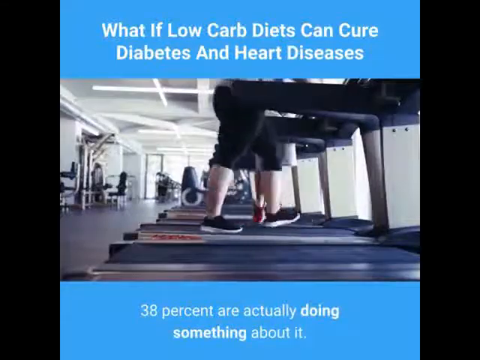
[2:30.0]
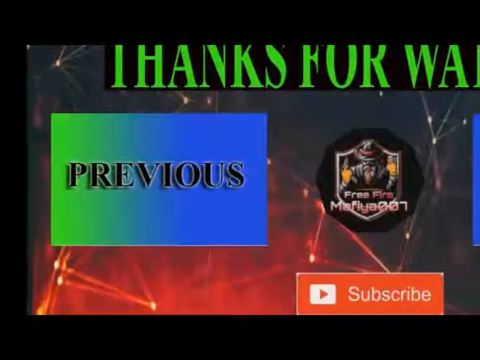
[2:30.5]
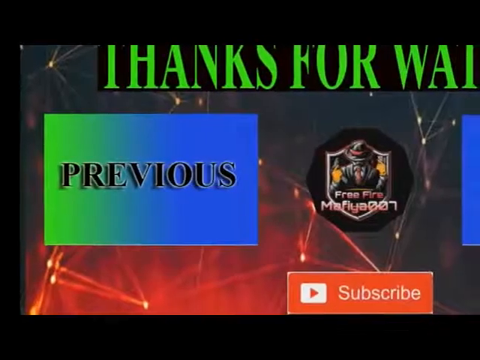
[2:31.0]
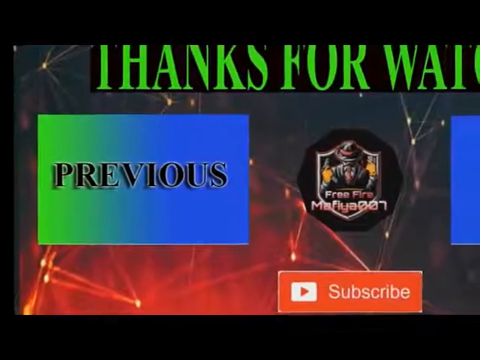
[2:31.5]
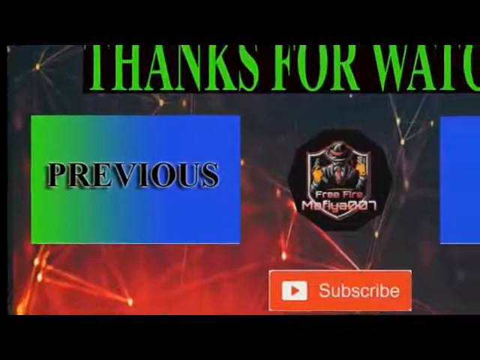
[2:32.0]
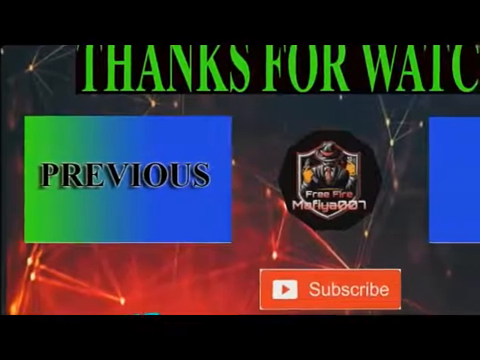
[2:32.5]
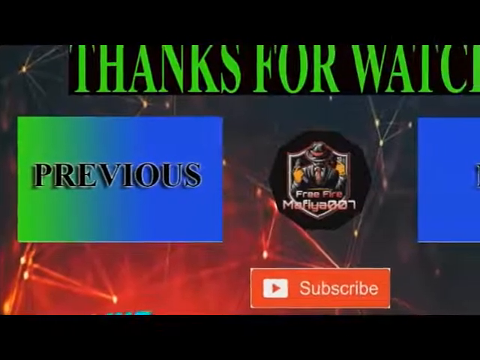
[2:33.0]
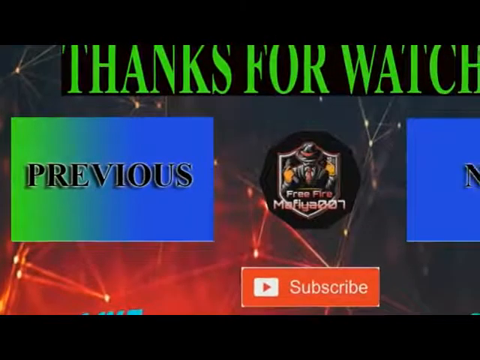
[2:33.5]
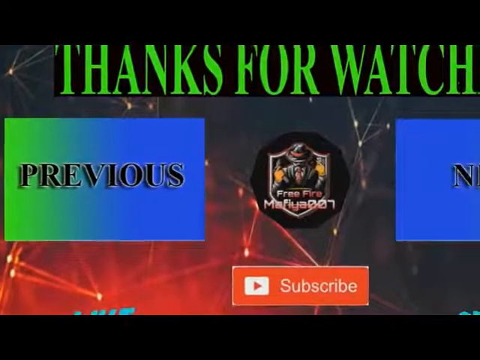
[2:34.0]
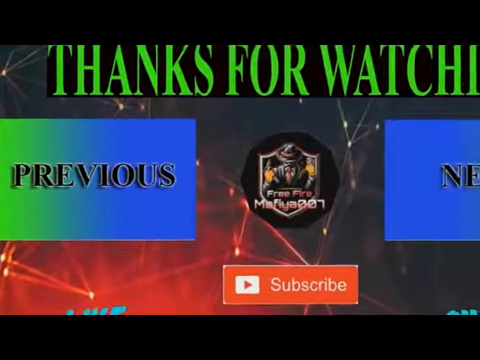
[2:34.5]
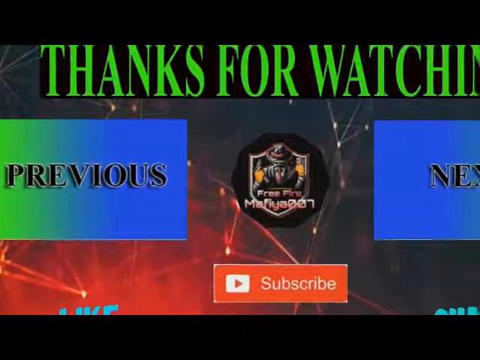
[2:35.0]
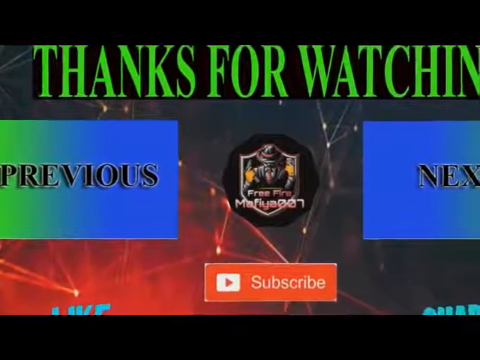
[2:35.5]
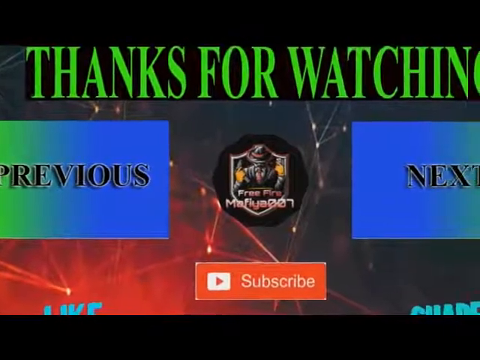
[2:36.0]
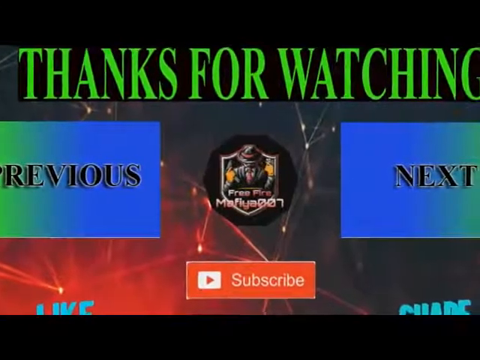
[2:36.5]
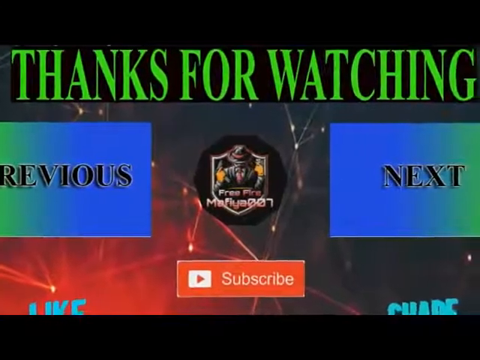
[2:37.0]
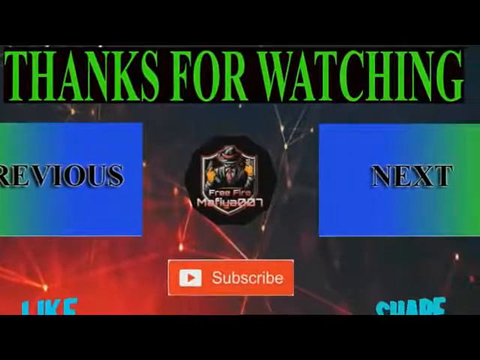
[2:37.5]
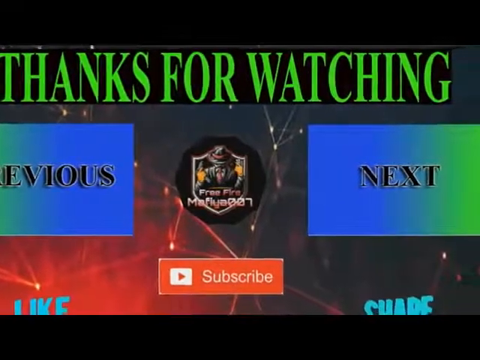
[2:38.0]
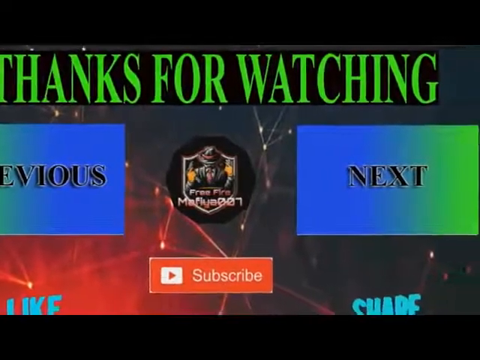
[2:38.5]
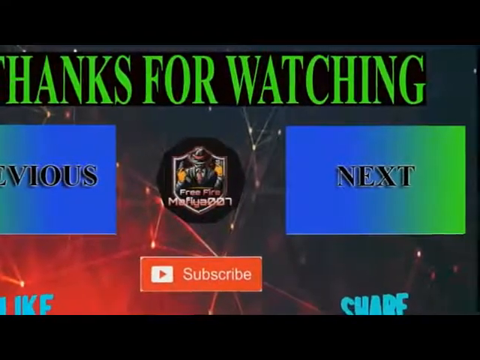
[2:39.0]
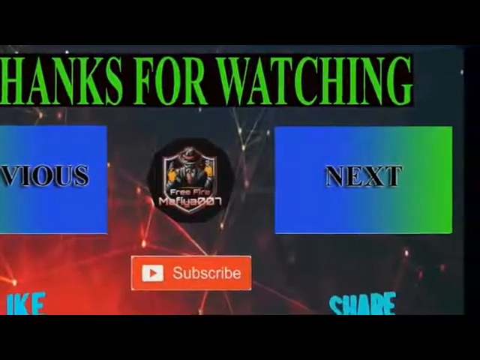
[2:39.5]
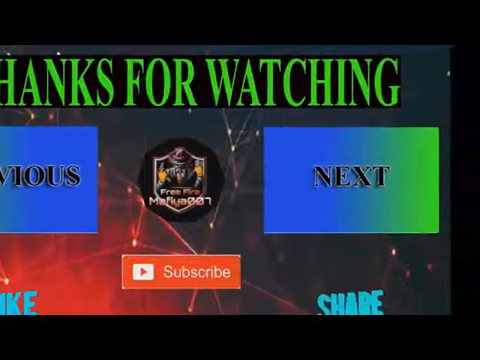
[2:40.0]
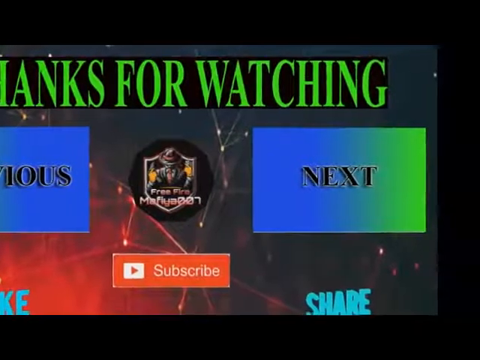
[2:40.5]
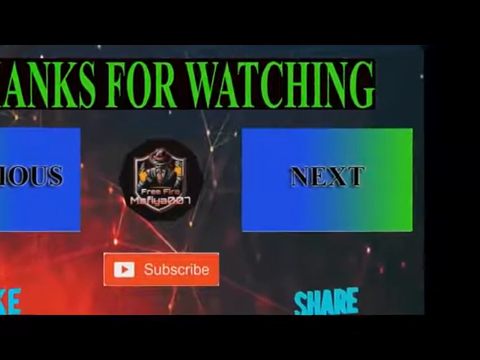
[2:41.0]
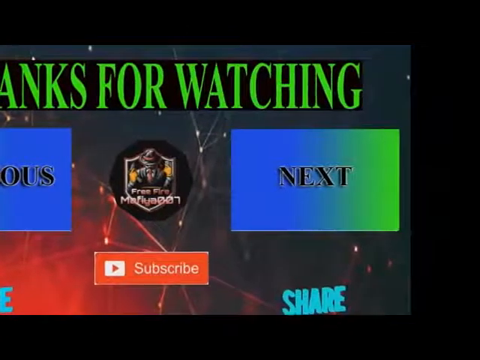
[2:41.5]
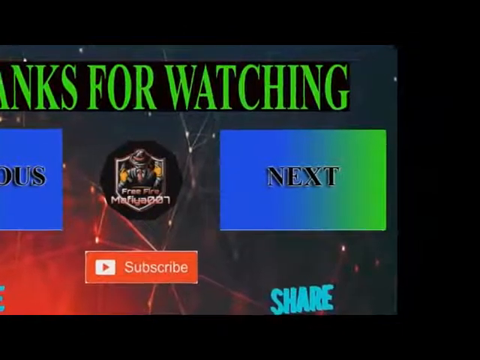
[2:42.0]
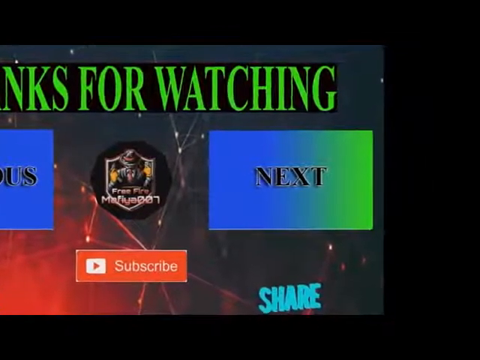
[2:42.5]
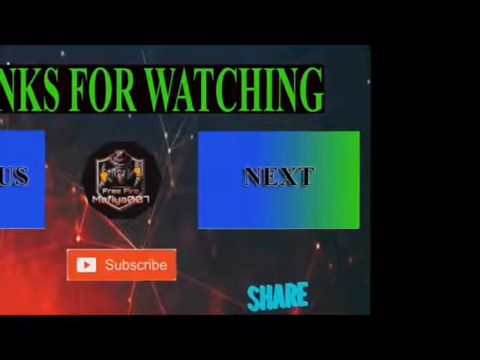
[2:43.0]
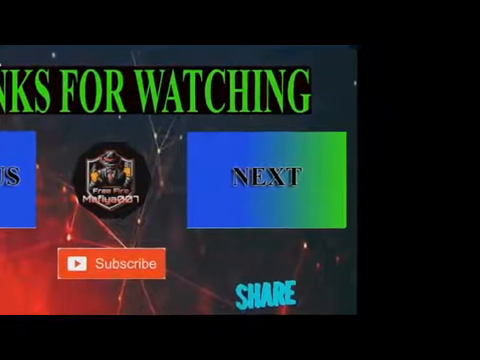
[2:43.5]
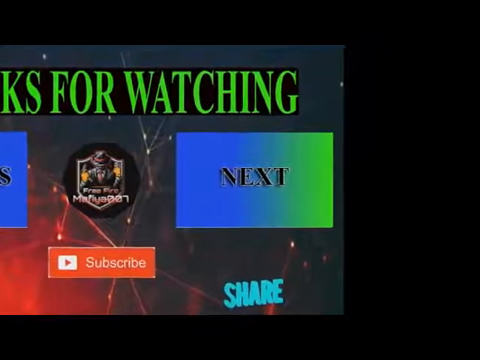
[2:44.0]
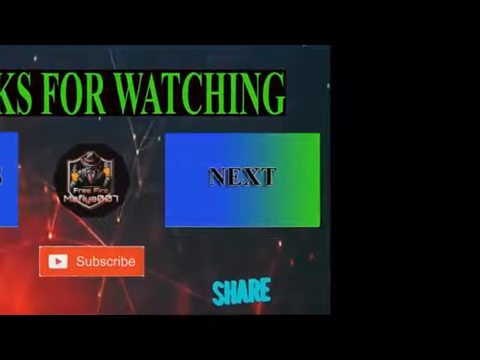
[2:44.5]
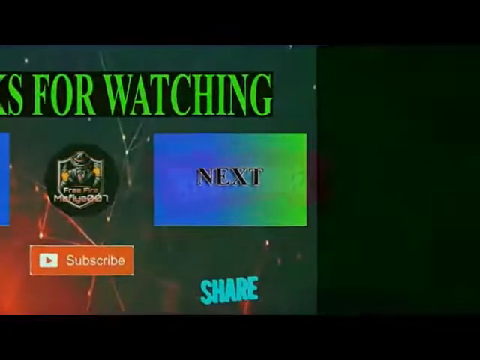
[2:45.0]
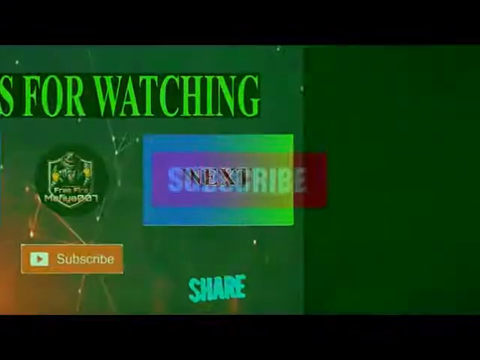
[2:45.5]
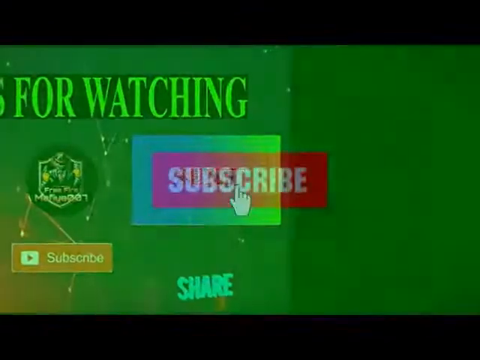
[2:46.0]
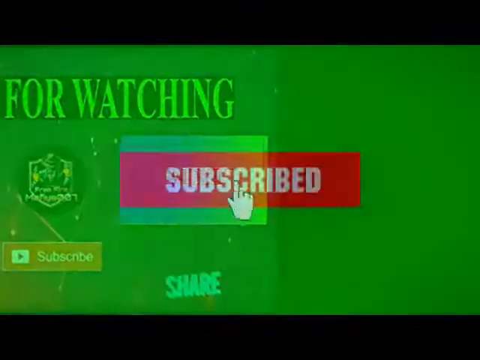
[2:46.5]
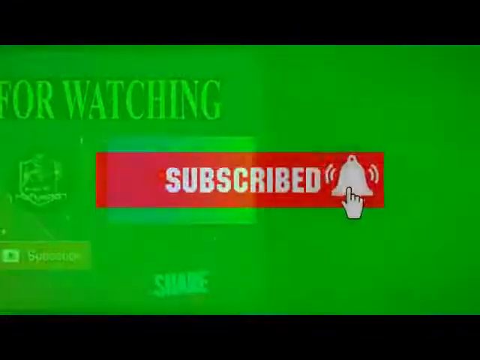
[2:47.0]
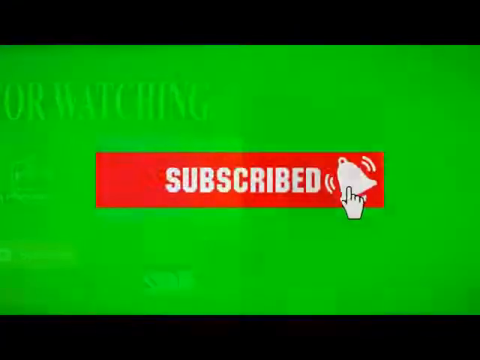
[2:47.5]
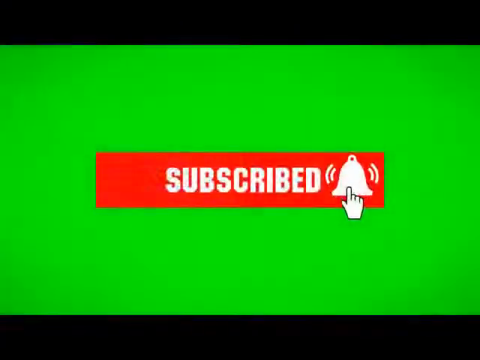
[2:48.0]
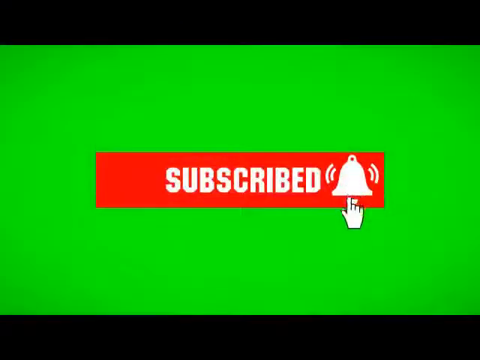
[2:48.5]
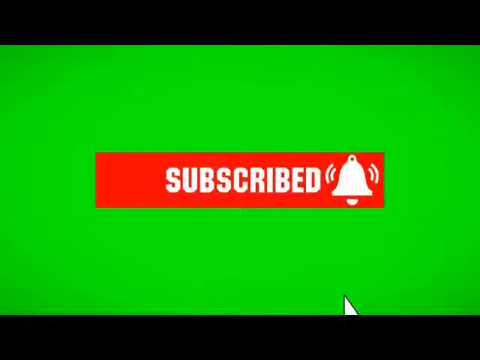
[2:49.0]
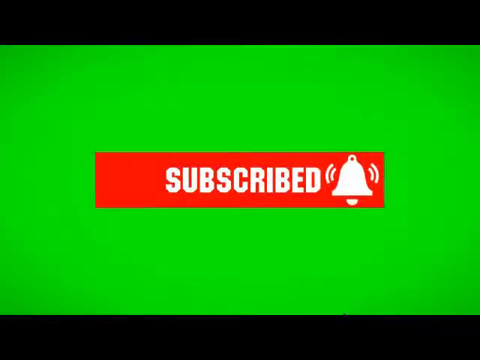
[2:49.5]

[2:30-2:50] An end screen reads "thanks for watching" in a very fluorescent green, with "previous" and "next" buttons, blue with green on the side, and a subscribe button in the middle; a little decal is between previous and next. The screen moves from right to left. Next to the subscribe button is a white bell with little lines around it. A white hand hits the subscribe button with its right index finger. The background is different colors, with fine lines connected by bright little lights.